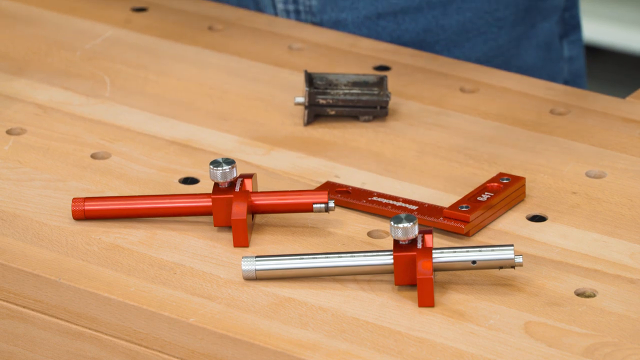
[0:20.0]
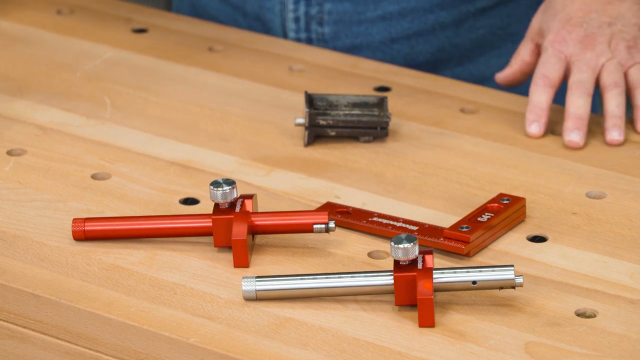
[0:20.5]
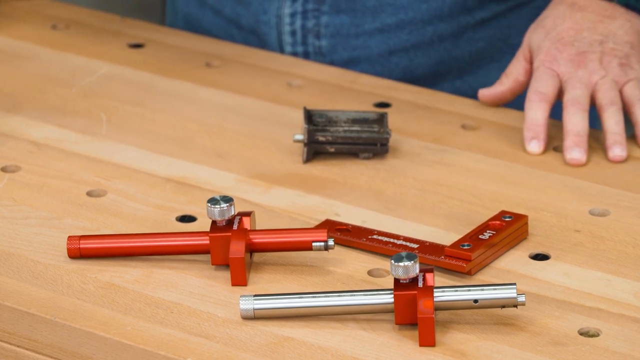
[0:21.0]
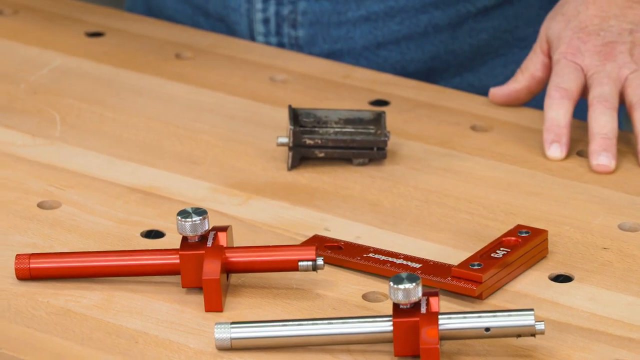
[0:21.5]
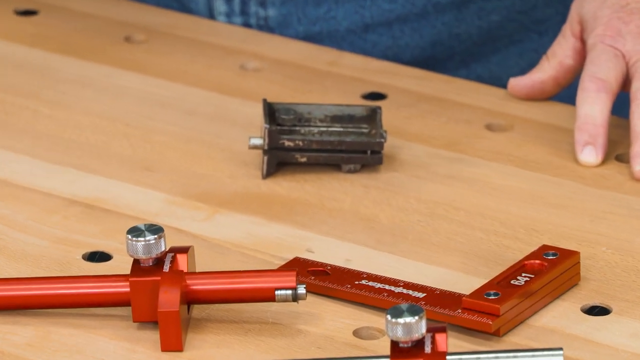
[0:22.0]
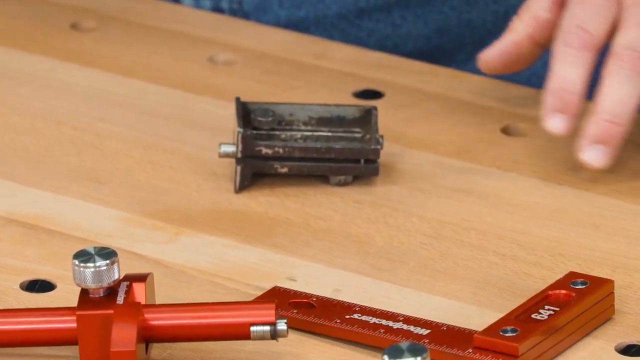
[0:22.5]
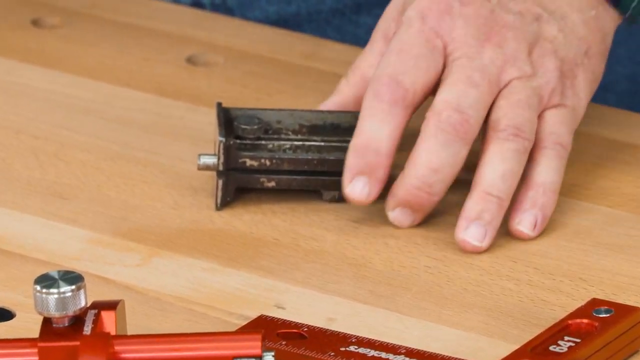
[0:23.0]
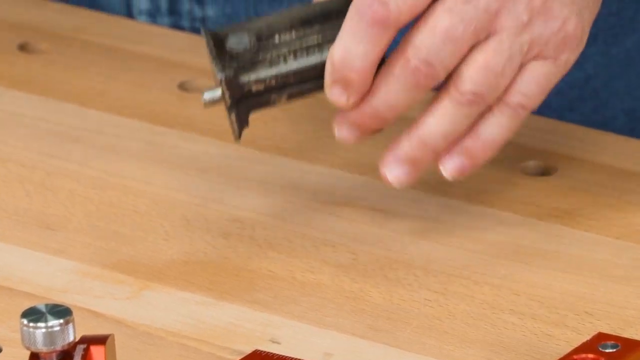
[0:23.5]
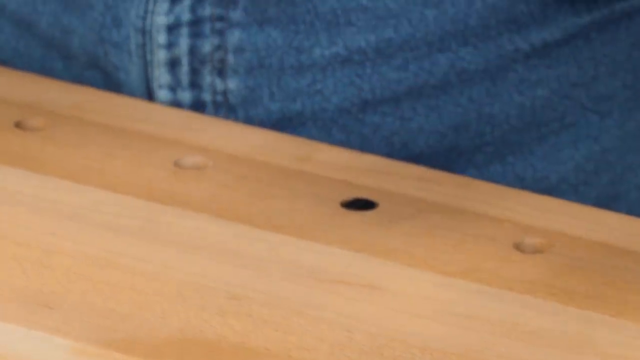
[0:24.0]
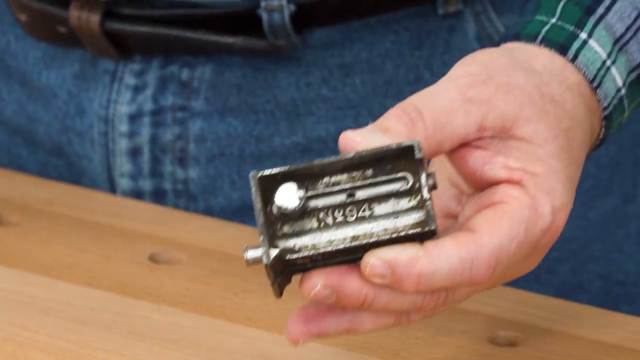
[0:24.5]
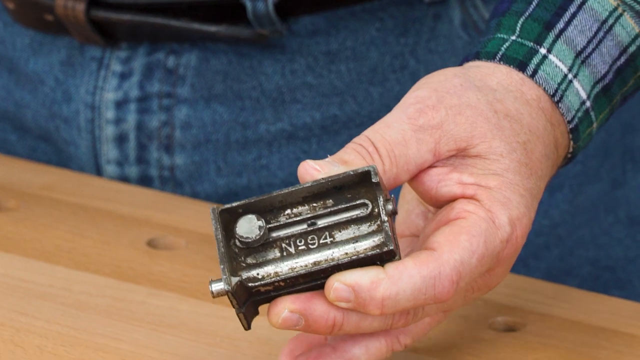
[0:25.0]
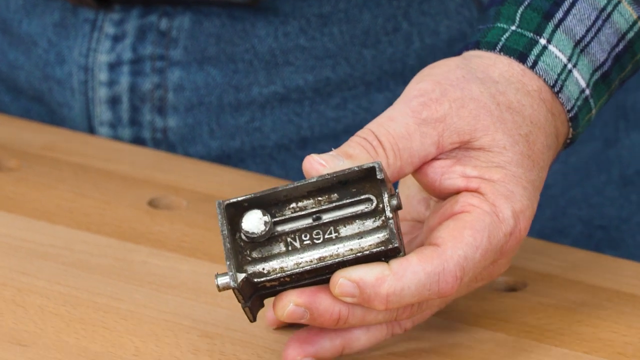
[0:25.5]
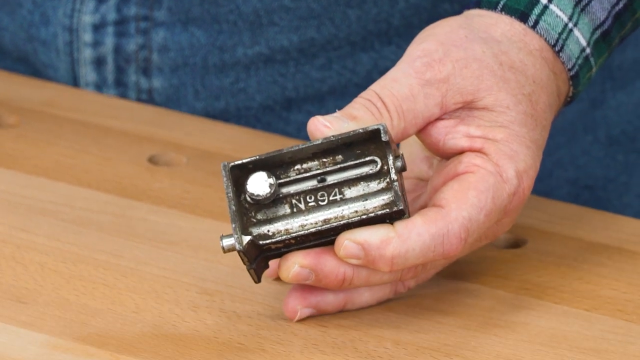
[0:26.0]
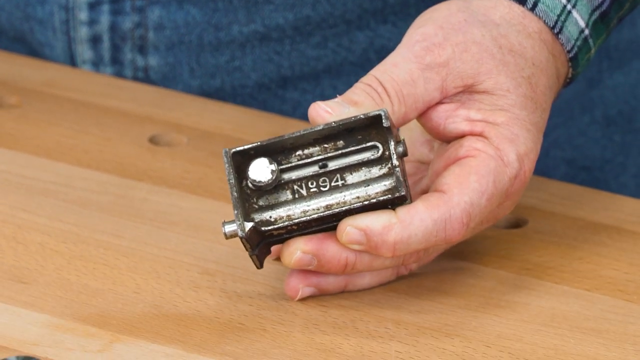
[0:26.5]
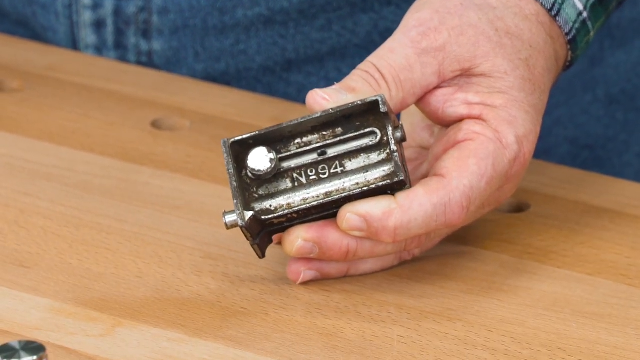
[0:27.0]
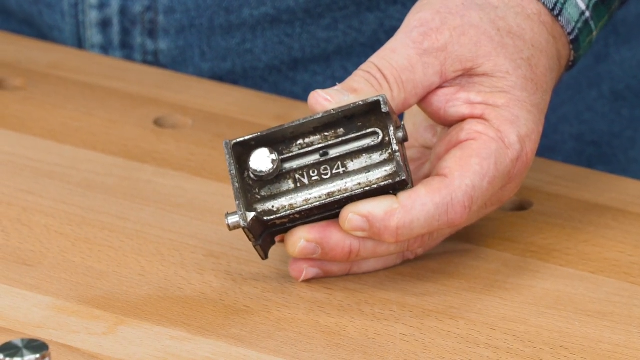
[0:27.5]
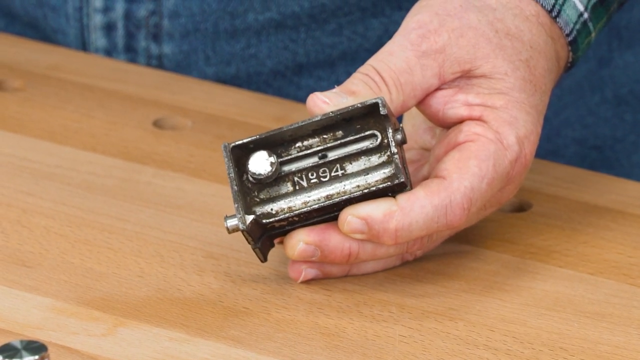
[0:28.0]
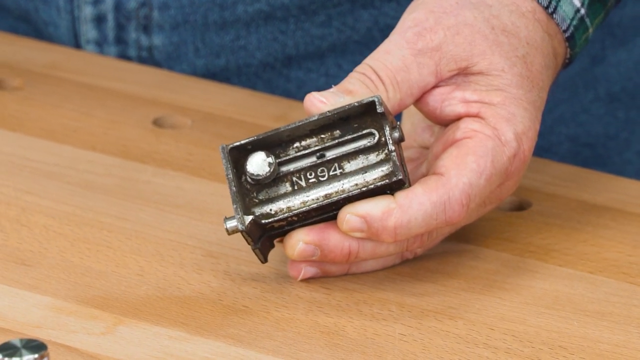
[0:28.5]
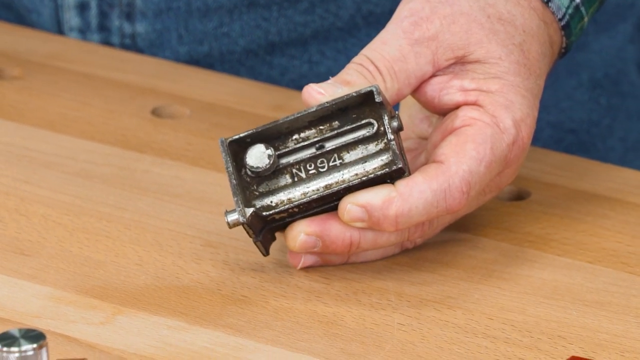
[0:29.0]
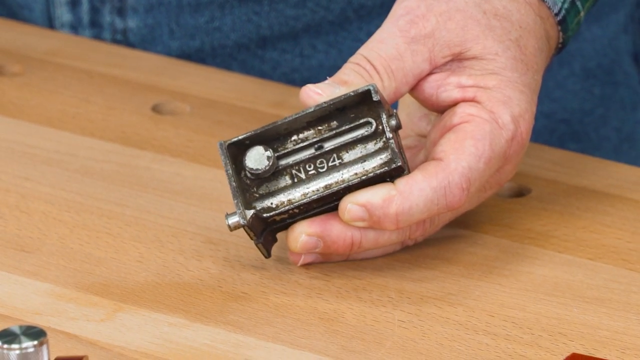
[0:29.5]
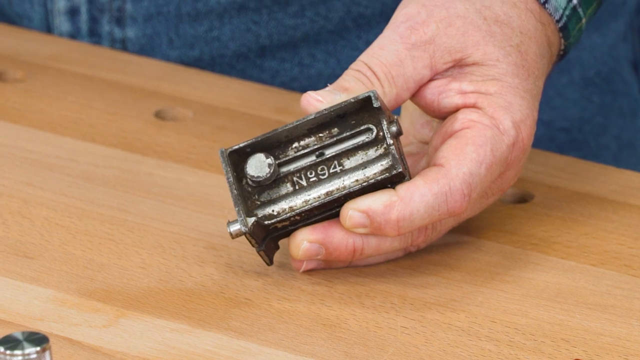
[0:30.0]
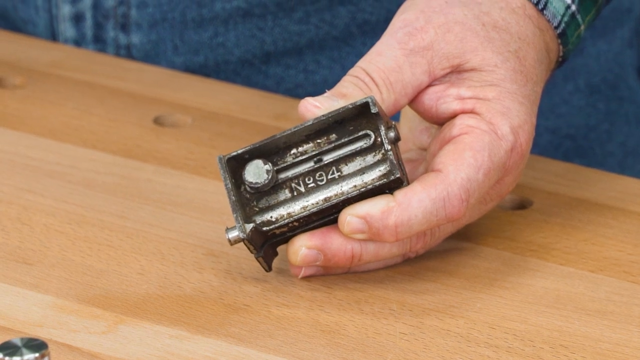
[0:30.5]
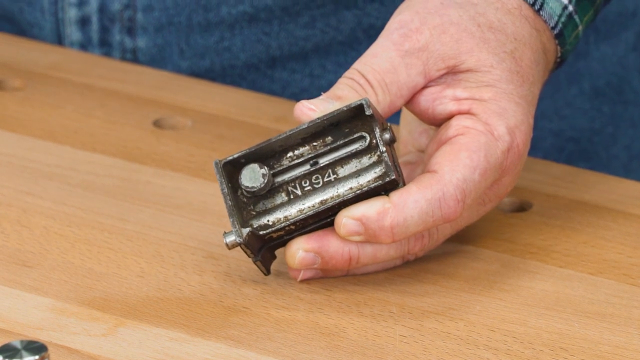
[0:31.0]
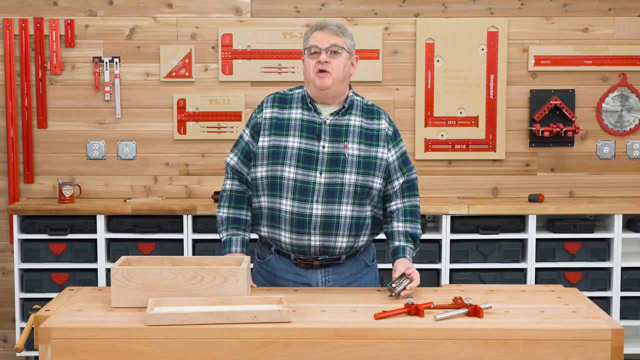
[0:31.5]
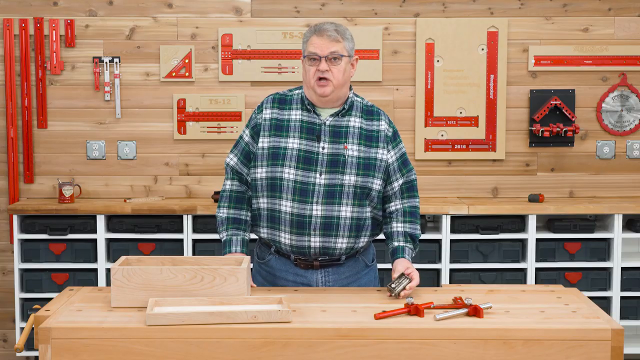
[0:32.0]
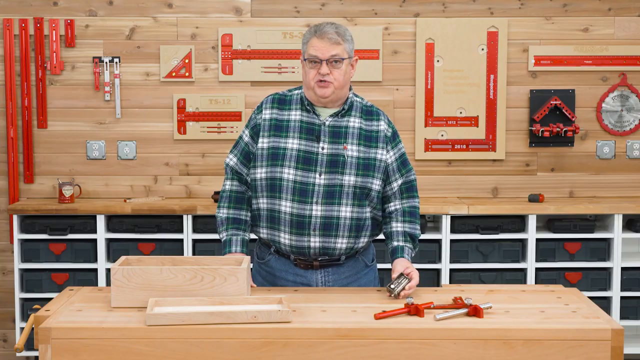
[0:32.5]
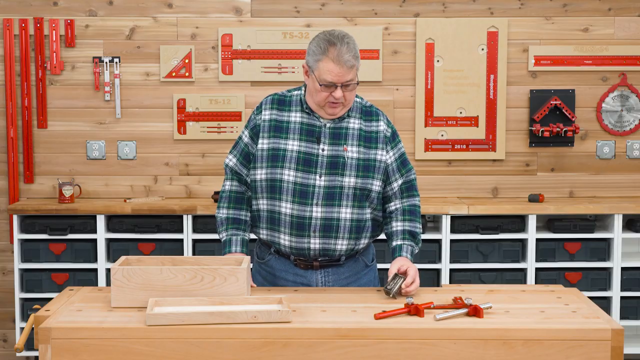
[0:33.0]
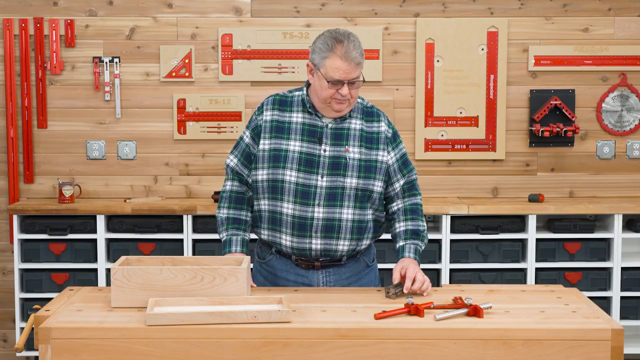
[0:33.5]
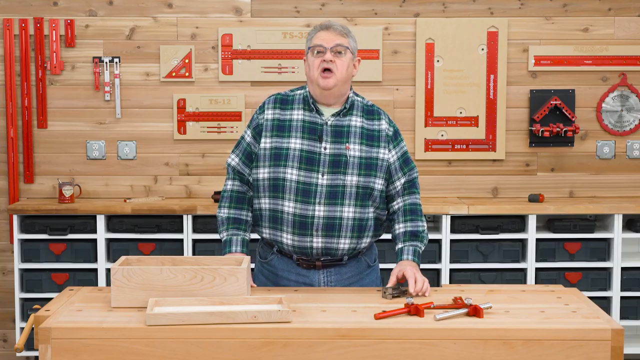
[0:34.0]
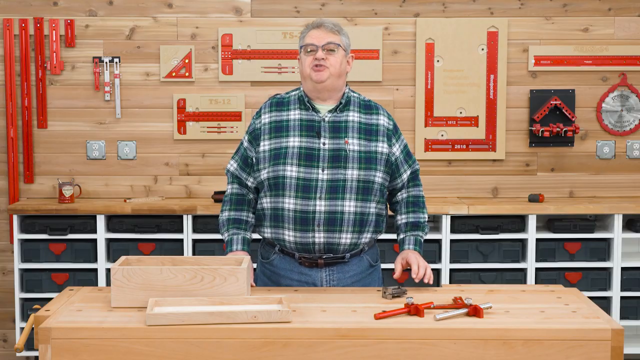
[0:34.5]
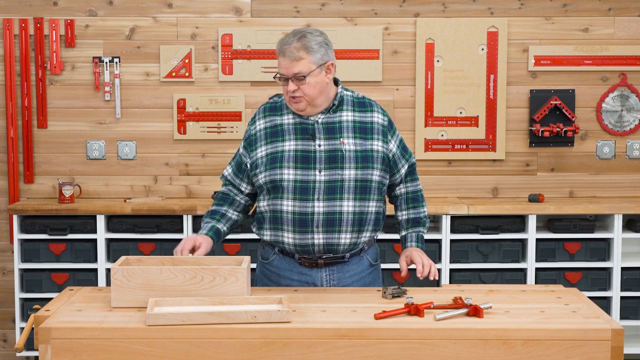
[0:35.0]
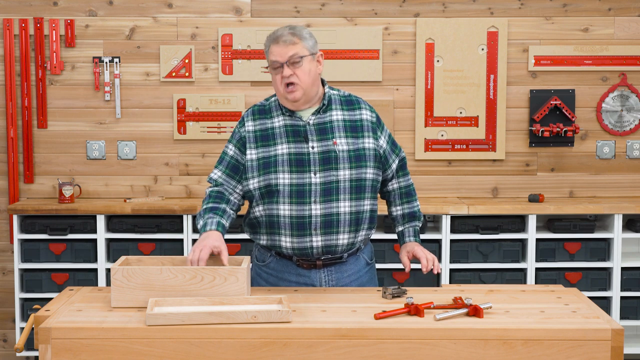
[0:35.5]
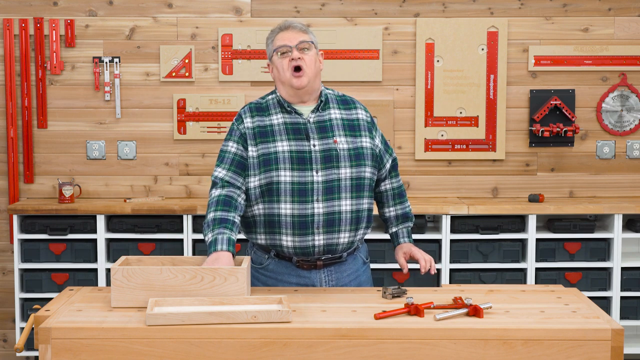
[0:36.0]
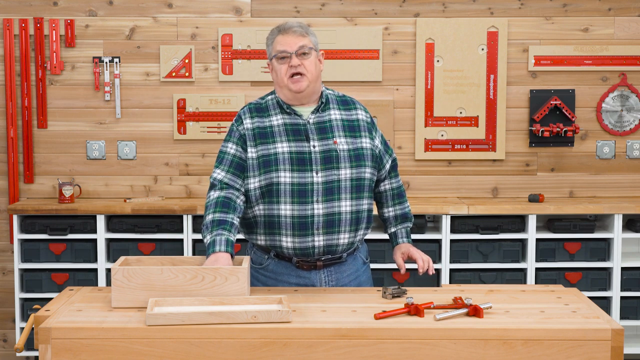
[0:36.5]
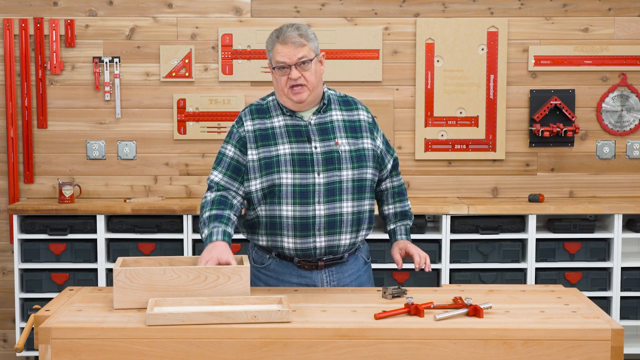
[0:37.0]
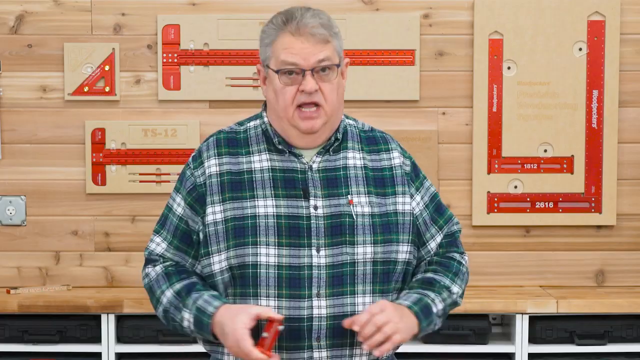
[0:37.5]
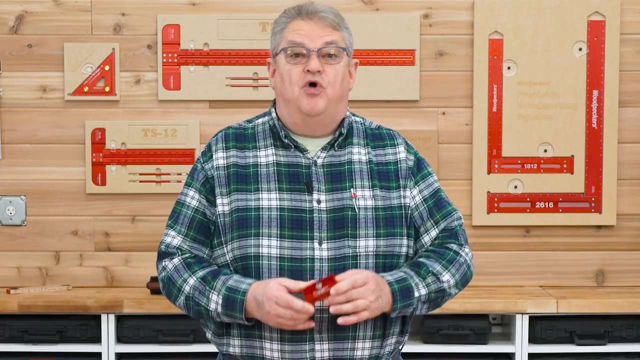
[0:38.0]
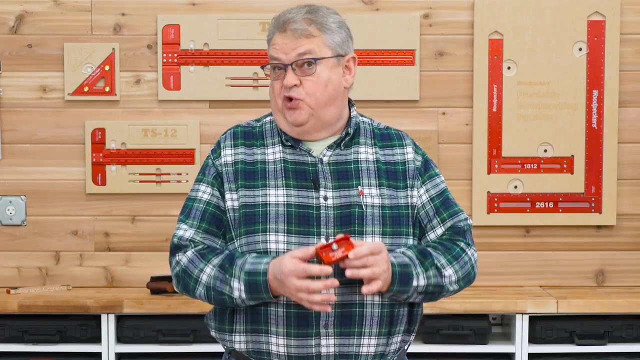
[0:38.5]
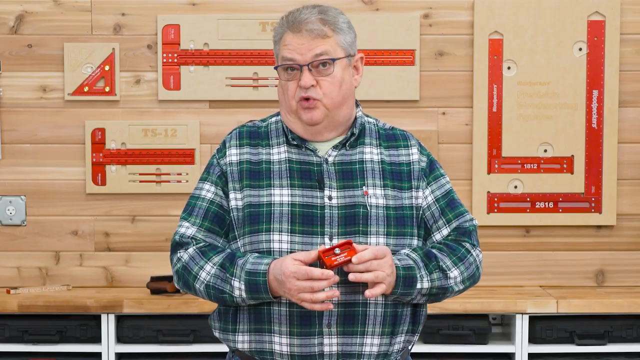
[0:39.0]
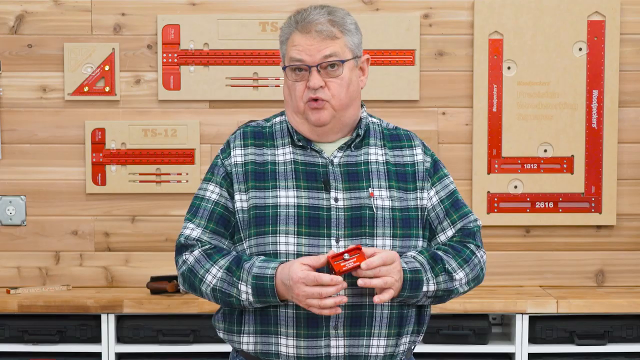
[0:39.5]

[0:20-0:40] In this how-to video, the man has a wooden box and a wooden lid on the workbench, along with two unidentified tools that look the same. Next to them is a 90-degree square. Something else lies on the bench that looks kind of like a piece of an old-fashioned wall-mounted pencil sharpener. A close-up shows this object, which has a number on it: "number 94". The camera zooms out, and the man takes something red out of the box, another unidentified item. Some of the tools are red and silver, like stainless steel. The object lying on the bench looks old and grimy and is kind of a dark color.